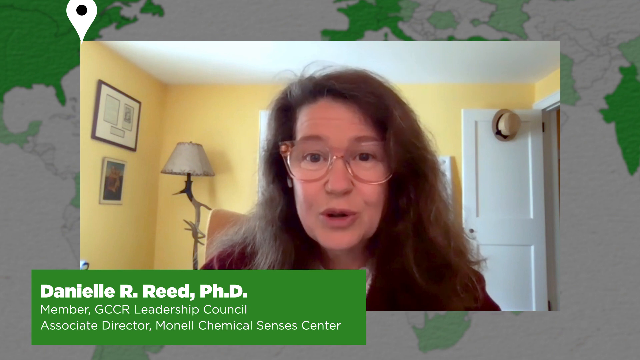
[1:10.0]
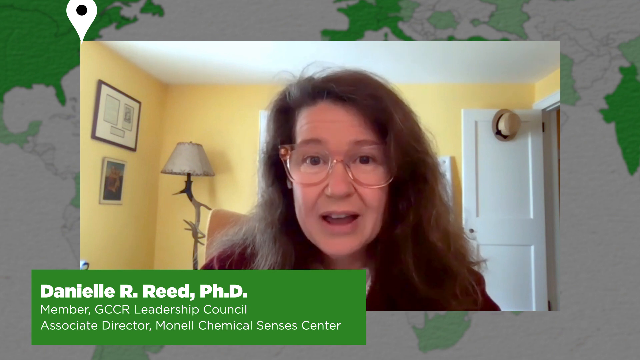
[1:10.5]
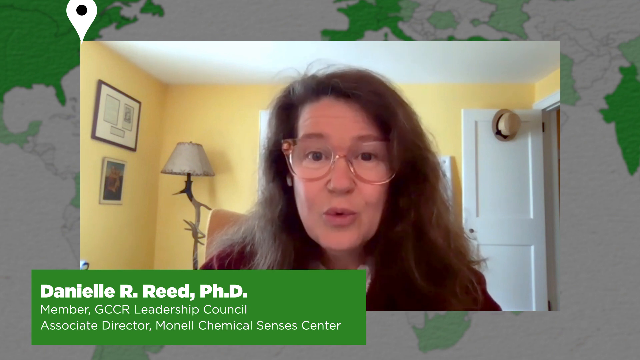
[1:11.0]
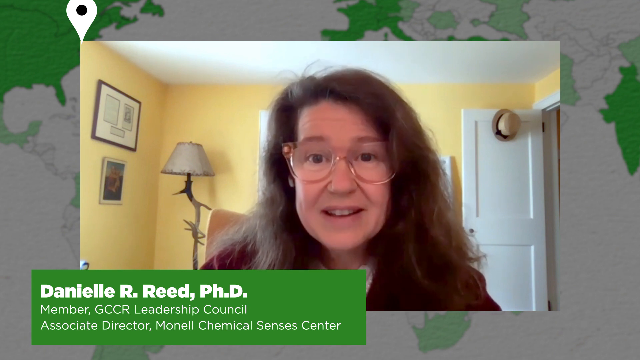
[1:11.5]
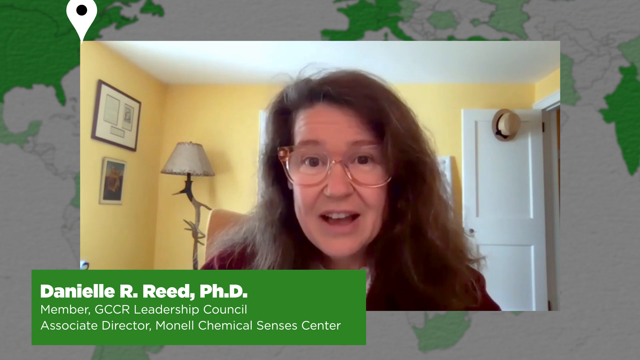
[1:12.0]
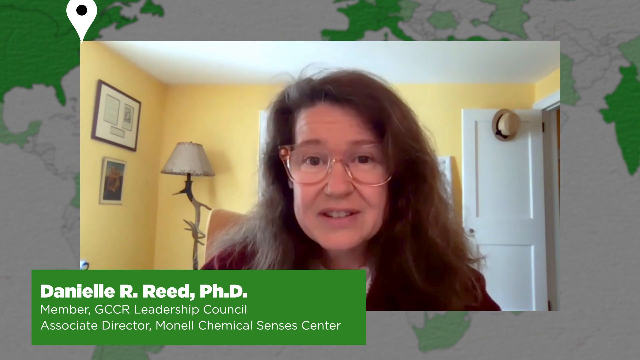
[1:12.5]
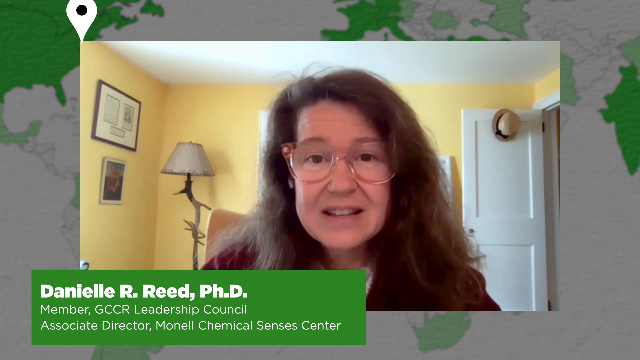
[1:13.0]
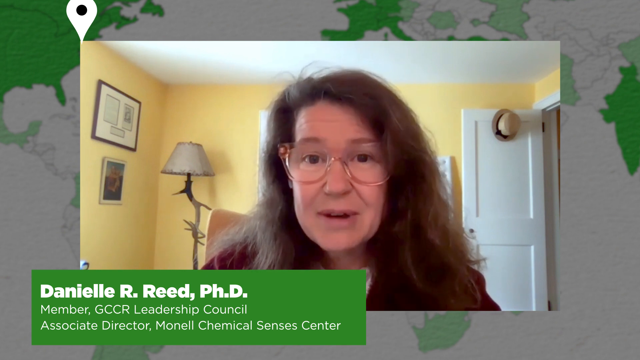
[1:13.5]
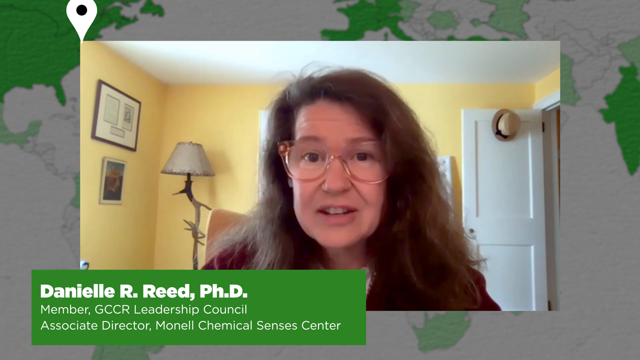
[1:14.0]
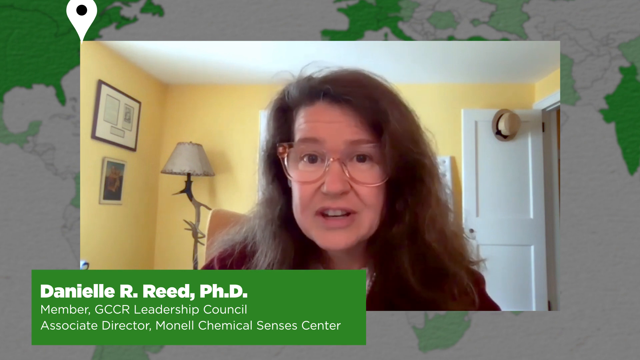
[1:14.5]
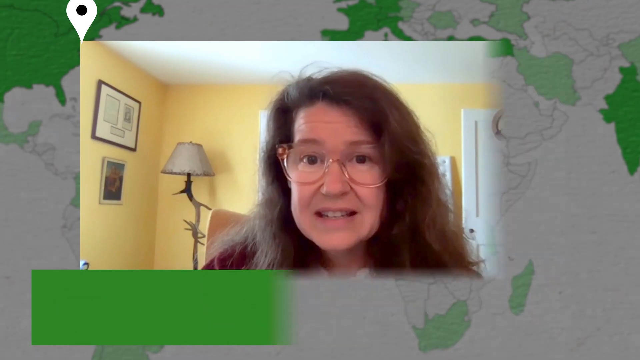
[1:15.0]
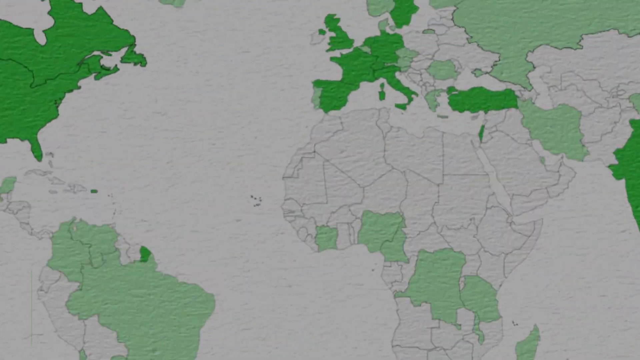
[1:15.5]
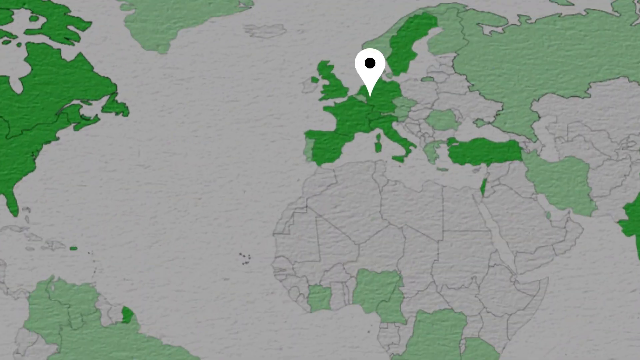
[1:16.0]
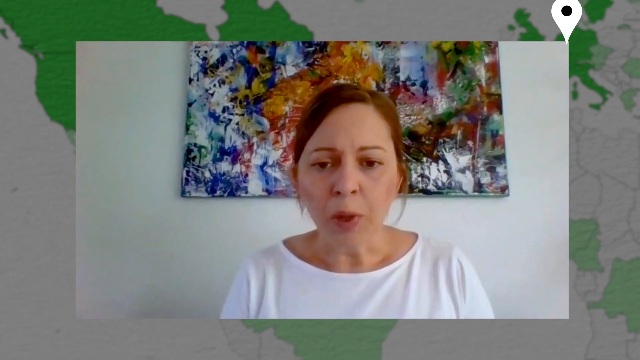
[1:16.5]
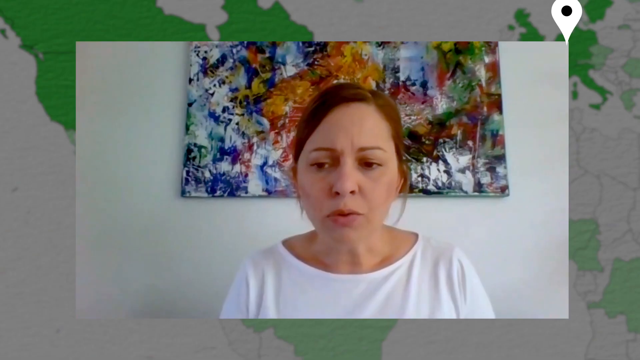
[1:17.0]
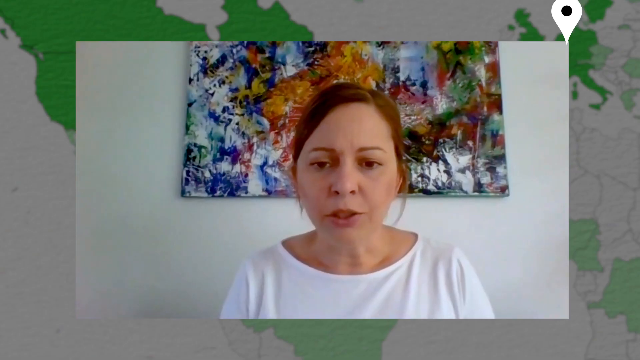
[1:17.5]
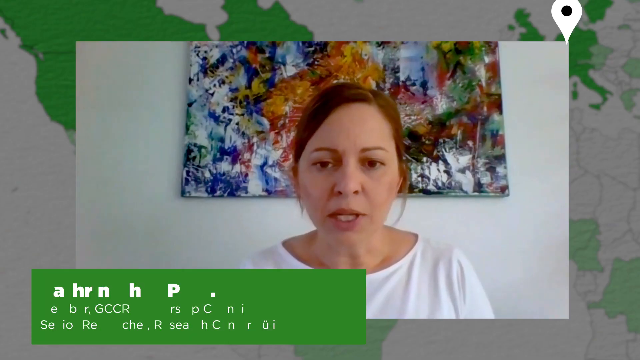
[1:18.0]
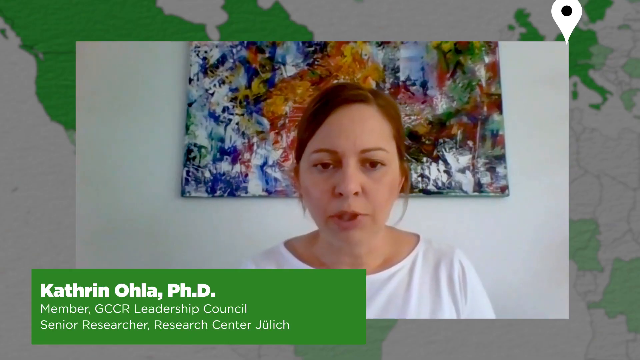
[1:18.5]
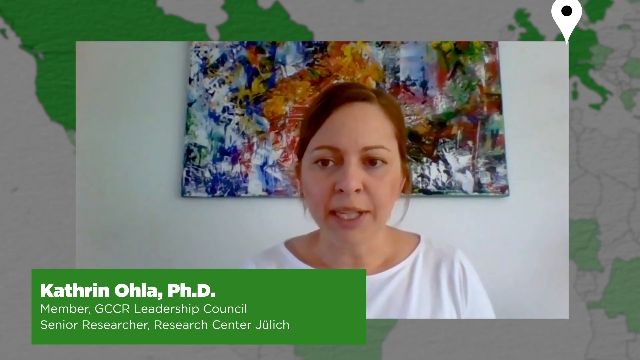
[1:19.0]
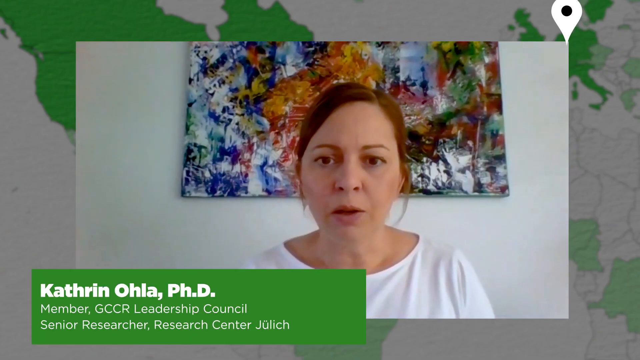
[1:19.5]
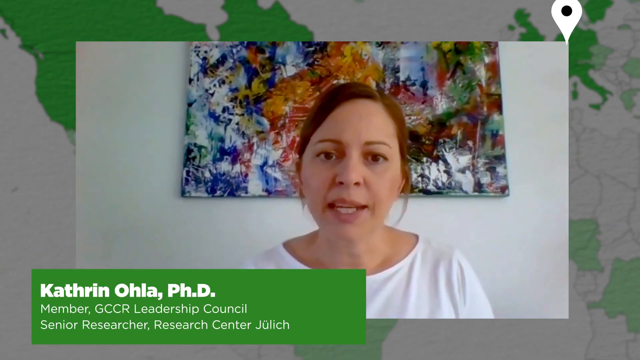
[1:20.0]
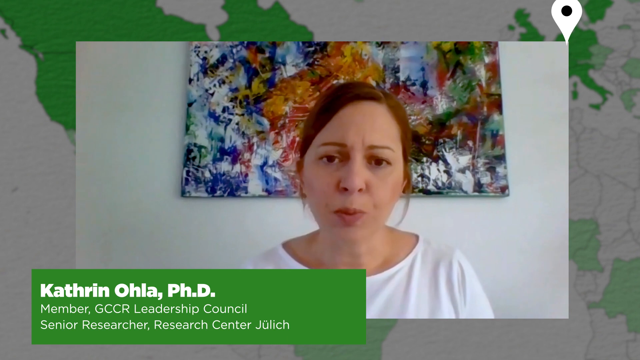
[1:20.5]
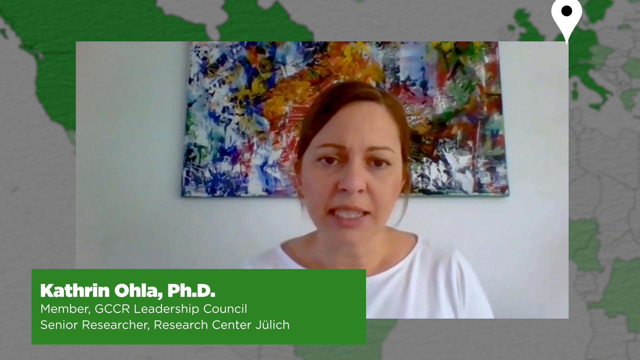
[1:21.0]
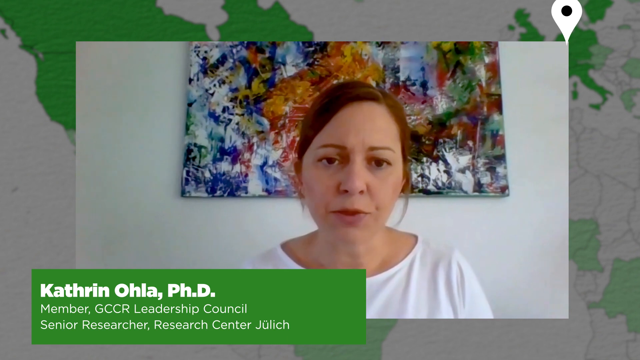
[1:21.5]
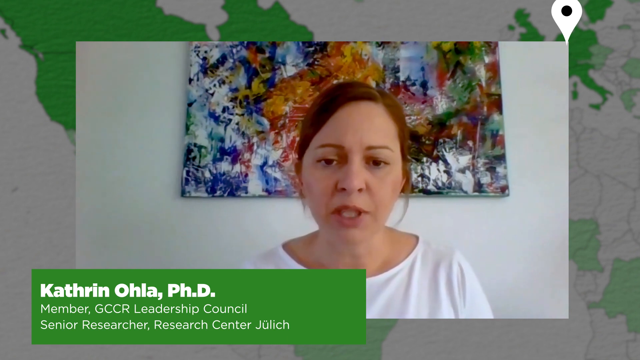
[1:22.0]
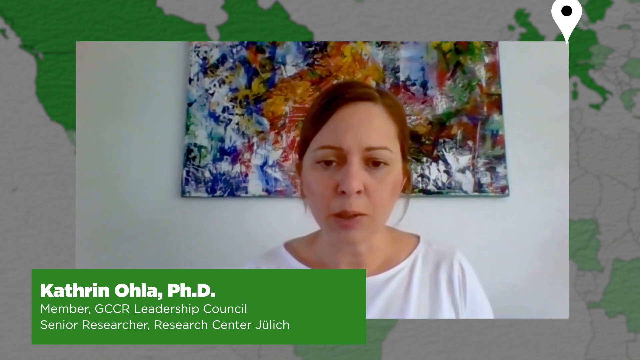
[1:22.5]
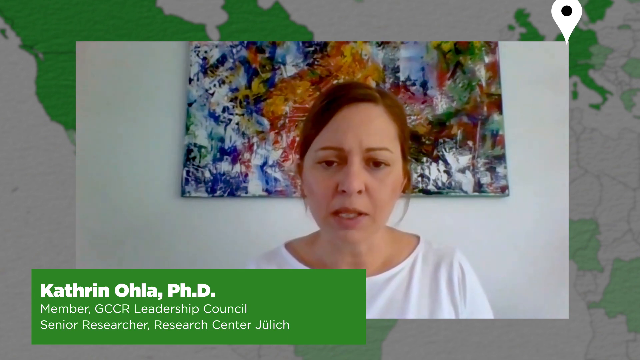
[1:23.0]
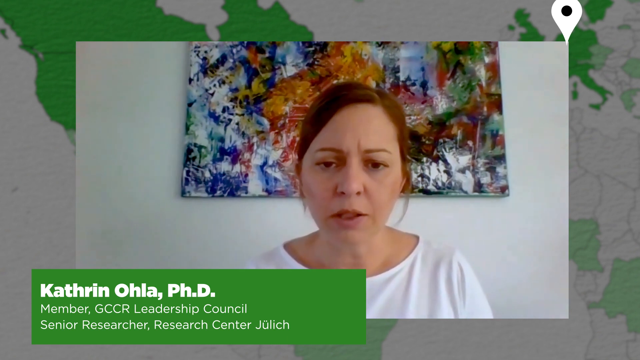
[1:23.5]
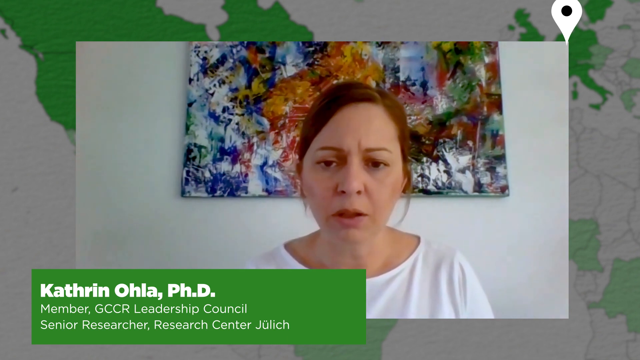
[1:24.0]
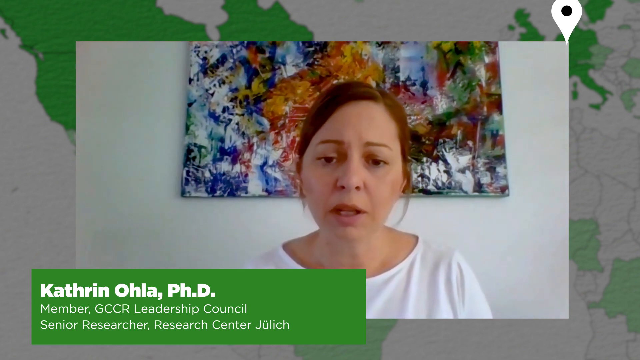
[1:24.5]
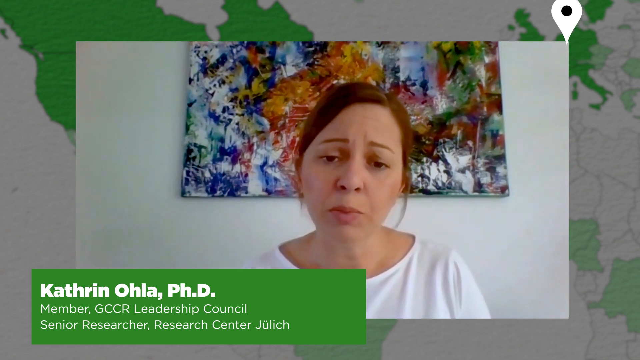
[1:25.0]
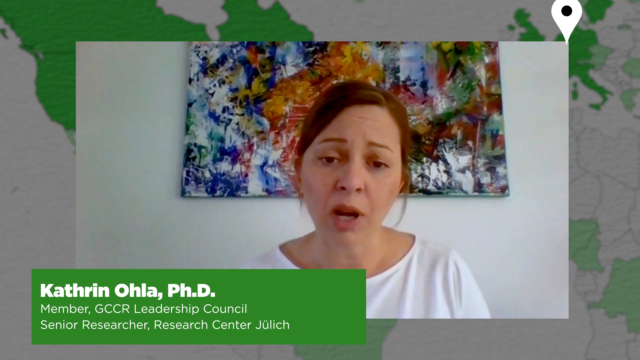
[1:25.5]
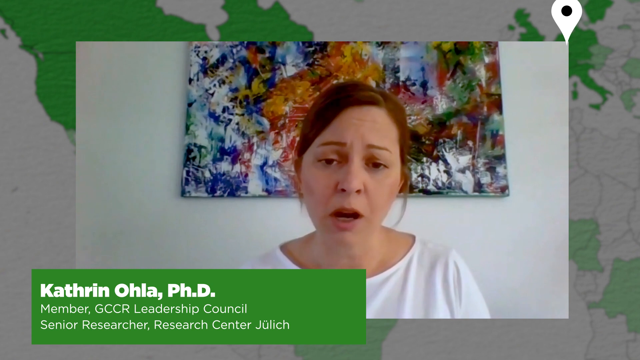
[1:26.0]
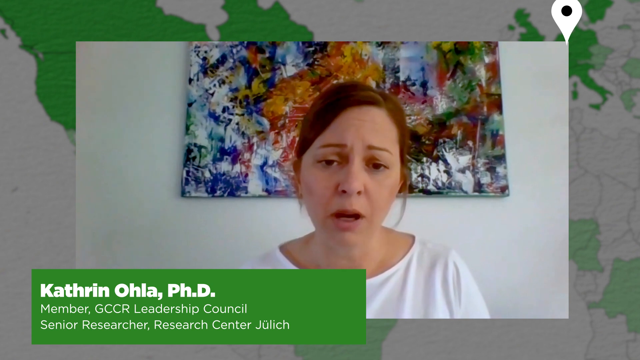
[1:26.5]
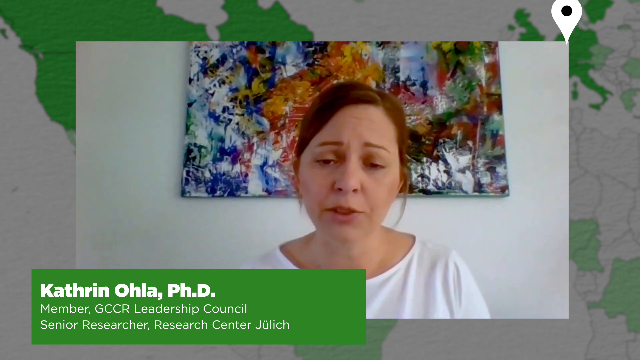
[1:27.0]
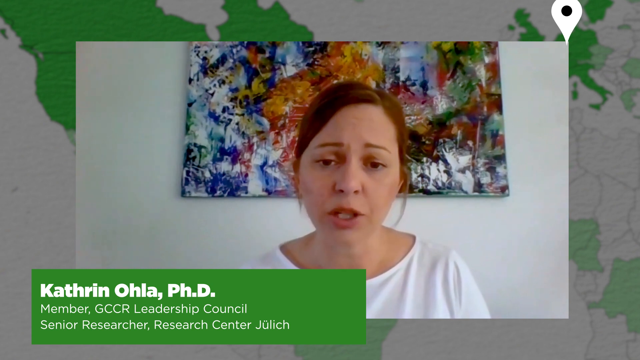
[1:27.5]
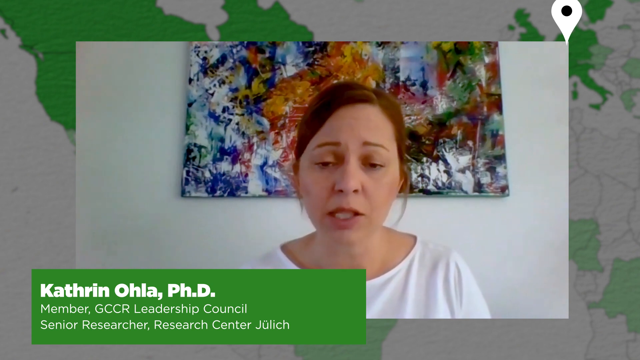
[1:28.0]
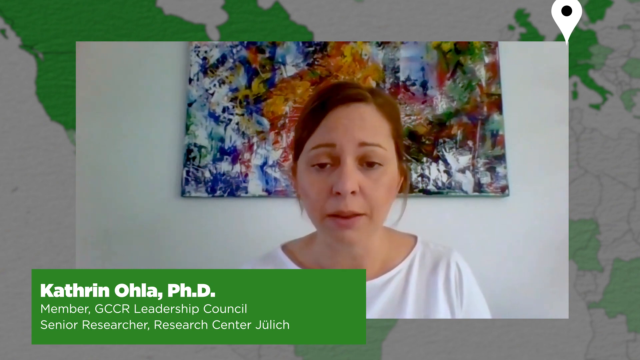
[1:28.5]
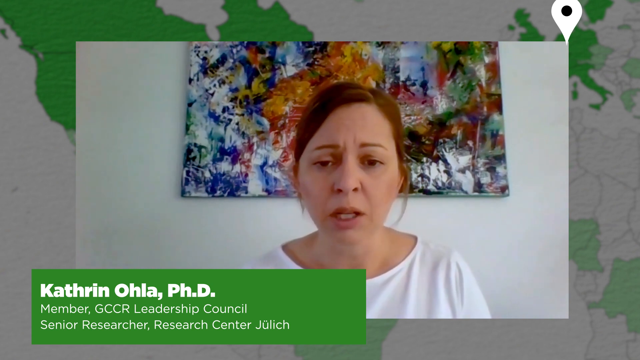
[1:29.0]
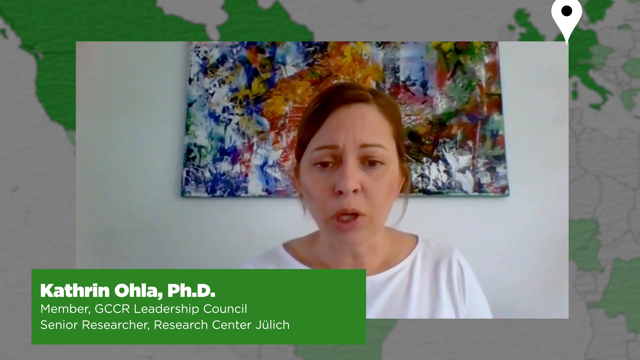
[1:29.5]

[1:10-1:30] A woman sits speaking directly into the camera, visible from the chest up. She has long brown hair and big rimmed glasses and wears a white shirt with a maroon shirt over it. She is in a yellow room with a white ceiling. Behind her over her left shoulder is a white door, and over her right shoulder is a lamp sitting on the ground, with a lamp pole and a tan lampshade at the top. Beneath her, in a green square, white text reads "Danielle R. Reed, Ph.D., member GCCR Leadership Council, Associate Director, Monel Chemical Senses Center." The video then cuts to another woman sitting in a white room, with a painting of splotches of different colors hanging on the wall behind her. She has long red hair pulled back in a ponytail and wears a white shirt. Along the bottom beneath her, in a green square, white text reads "Catherine Ola, Ph.D., member GCCR Leadership Council, Senior Researcher, Research Center."